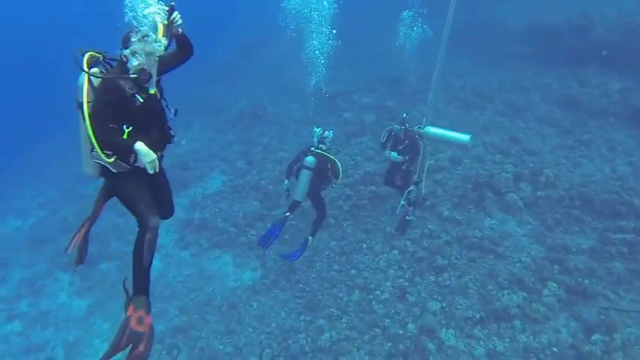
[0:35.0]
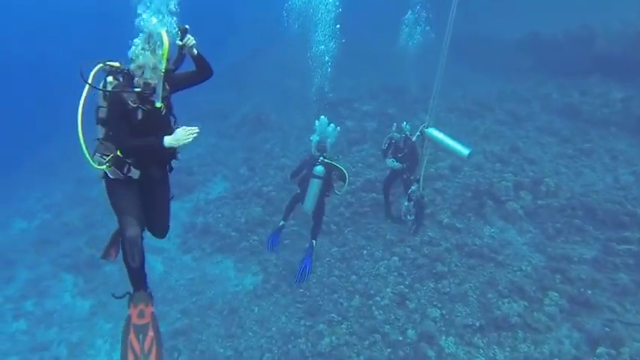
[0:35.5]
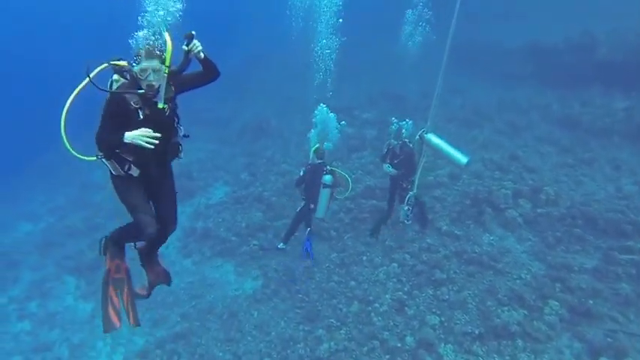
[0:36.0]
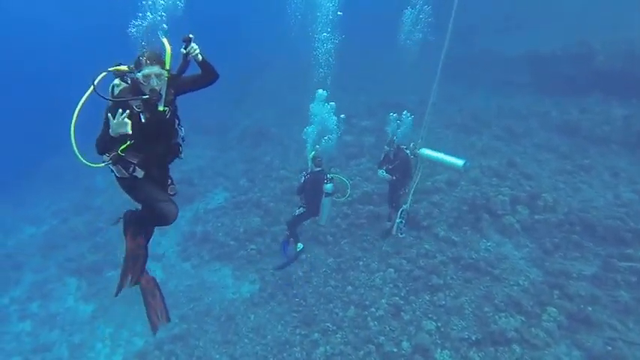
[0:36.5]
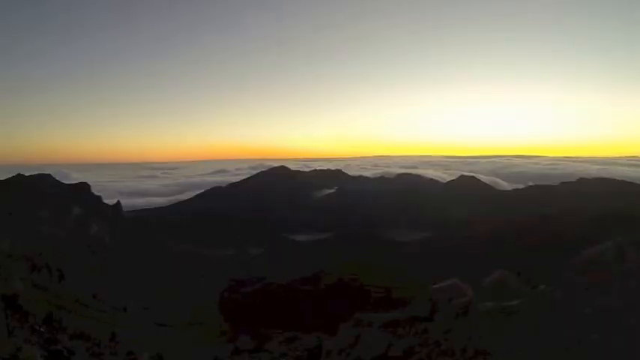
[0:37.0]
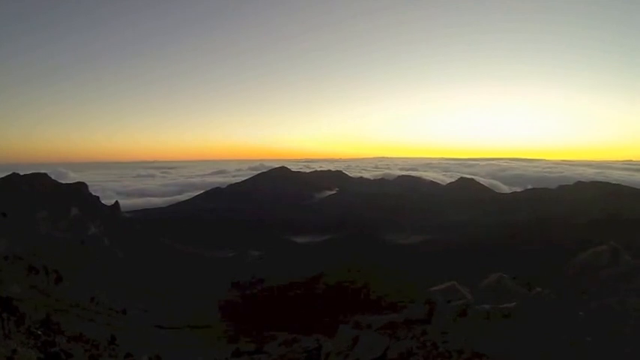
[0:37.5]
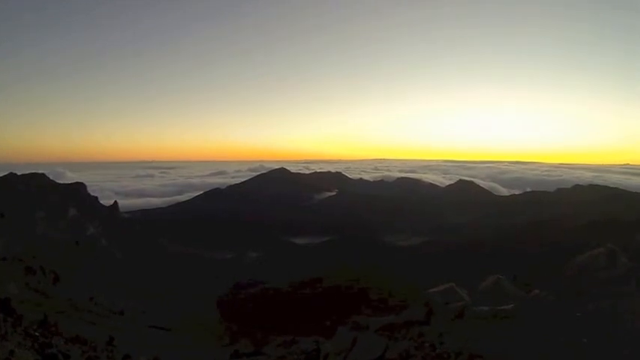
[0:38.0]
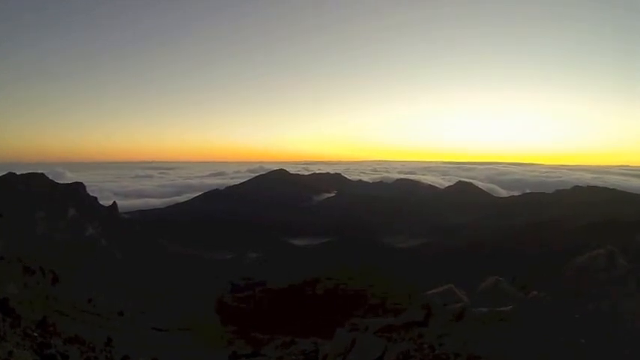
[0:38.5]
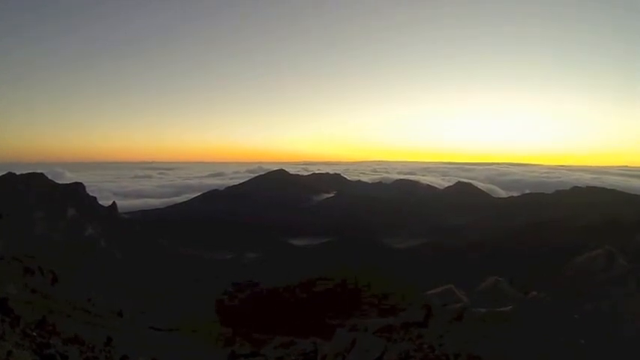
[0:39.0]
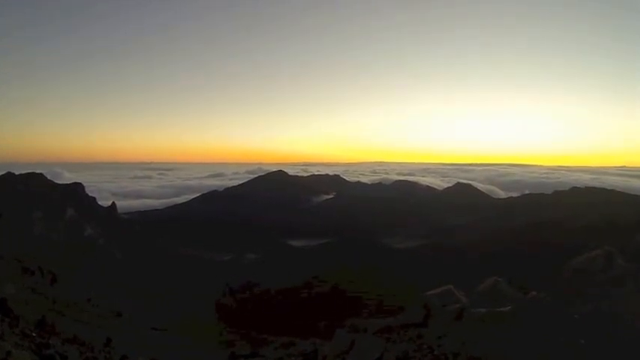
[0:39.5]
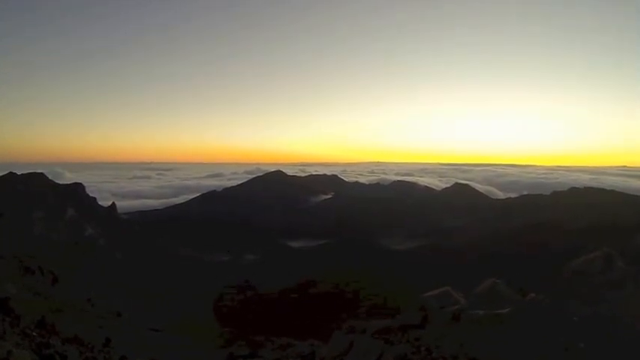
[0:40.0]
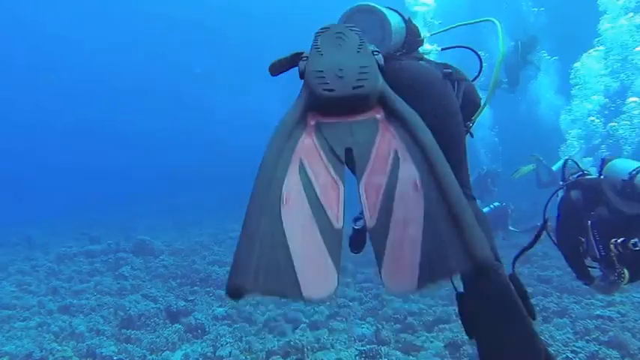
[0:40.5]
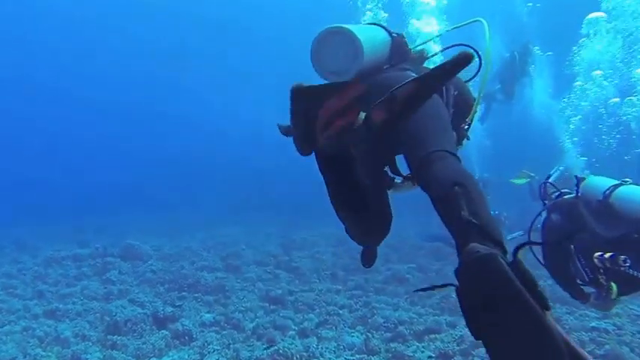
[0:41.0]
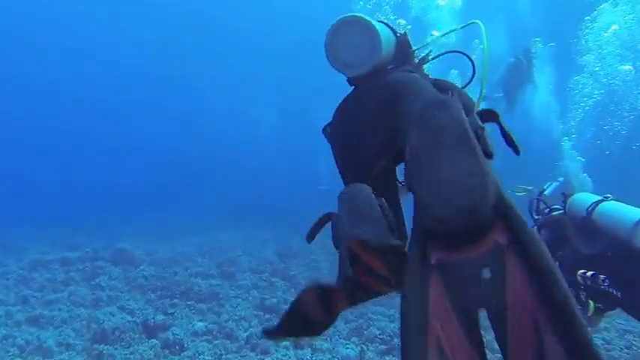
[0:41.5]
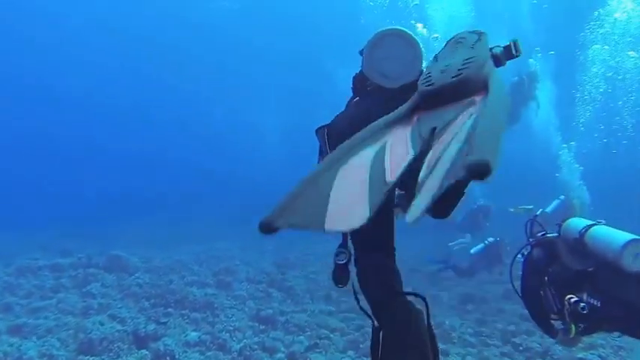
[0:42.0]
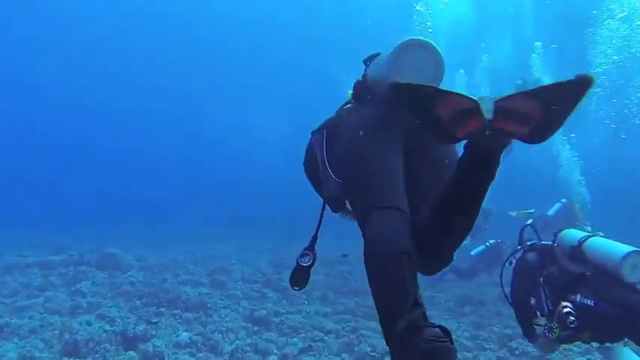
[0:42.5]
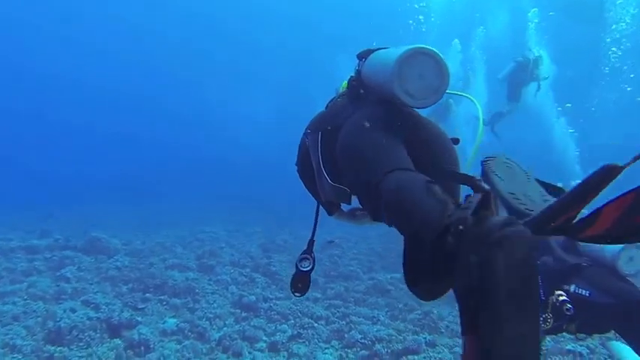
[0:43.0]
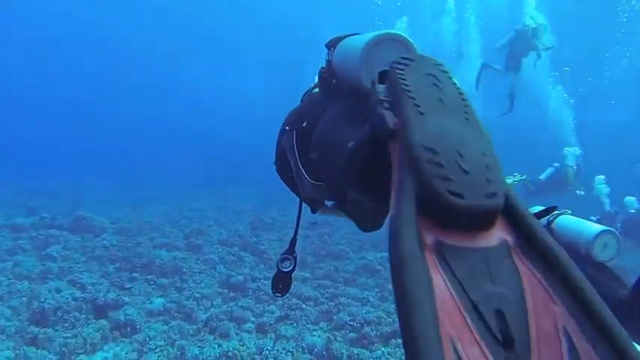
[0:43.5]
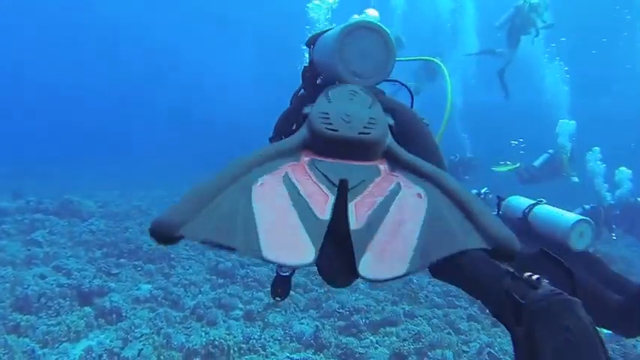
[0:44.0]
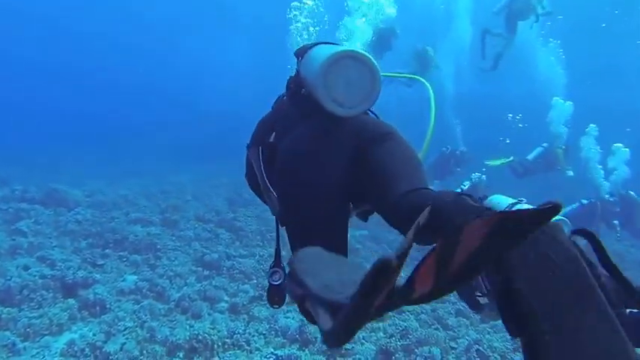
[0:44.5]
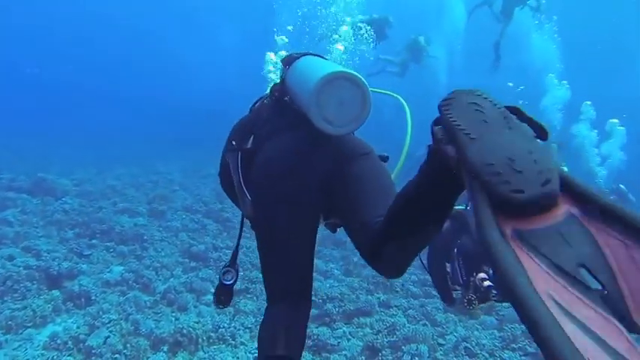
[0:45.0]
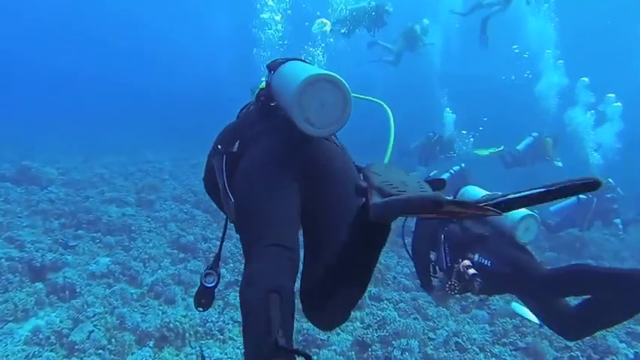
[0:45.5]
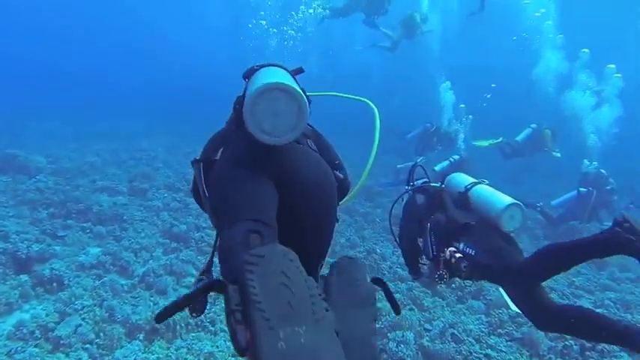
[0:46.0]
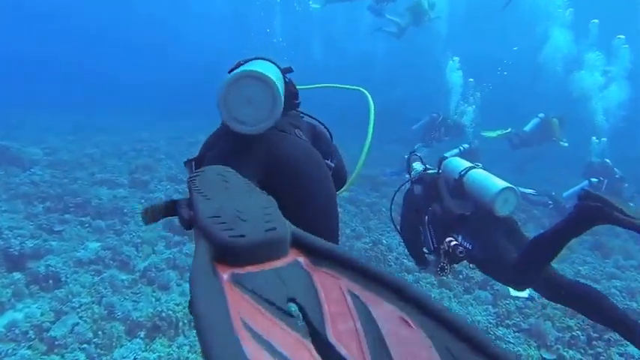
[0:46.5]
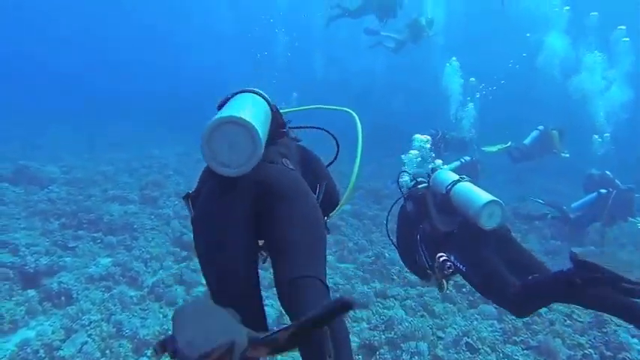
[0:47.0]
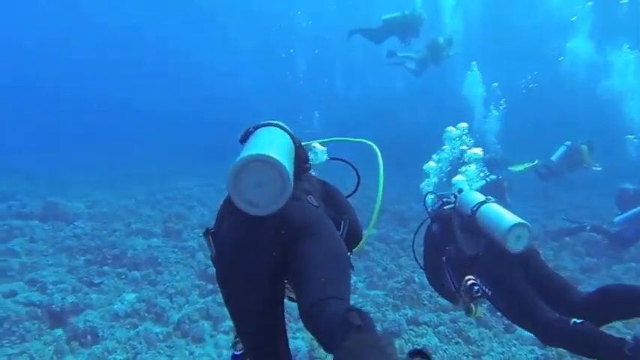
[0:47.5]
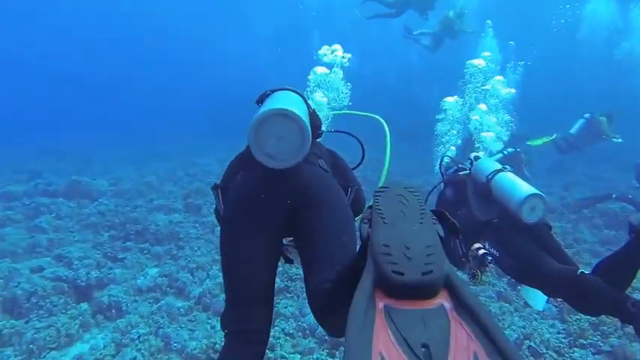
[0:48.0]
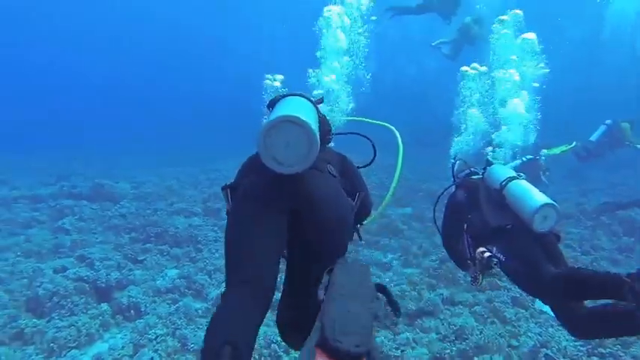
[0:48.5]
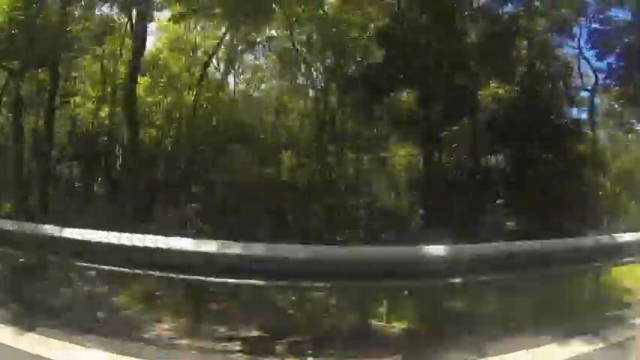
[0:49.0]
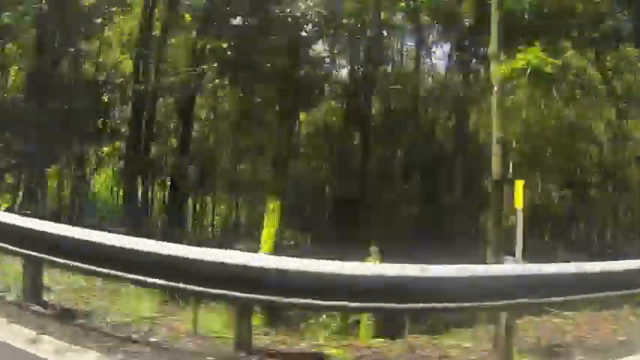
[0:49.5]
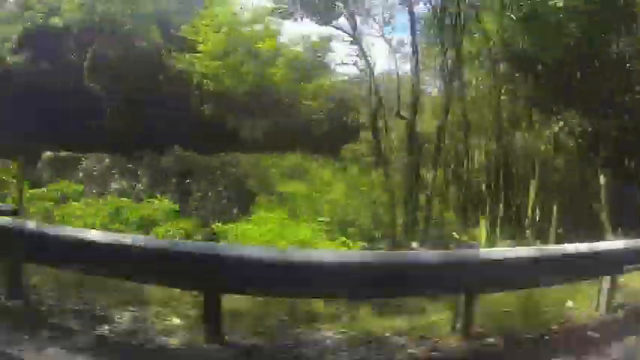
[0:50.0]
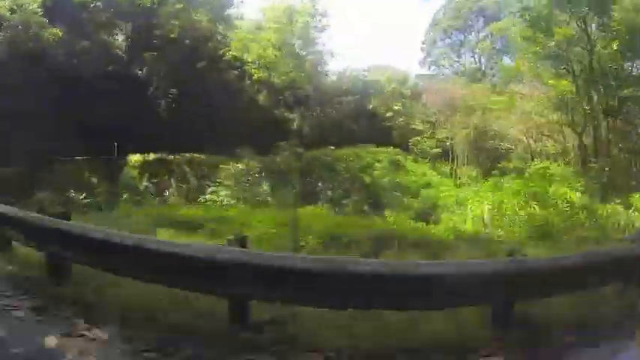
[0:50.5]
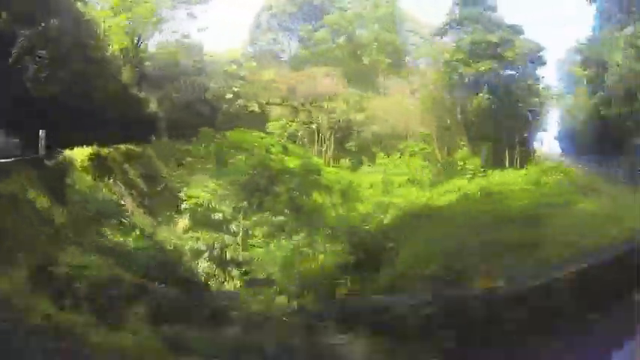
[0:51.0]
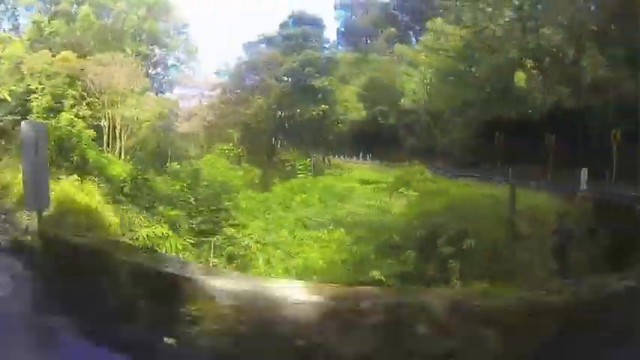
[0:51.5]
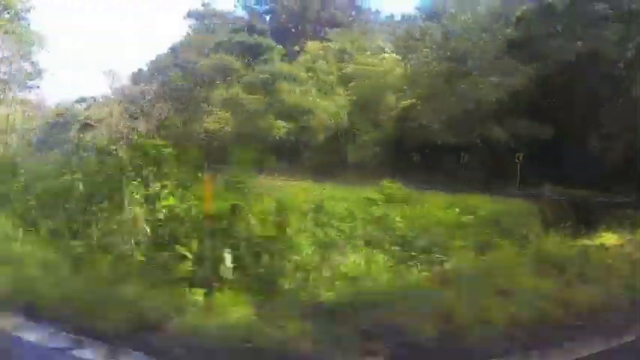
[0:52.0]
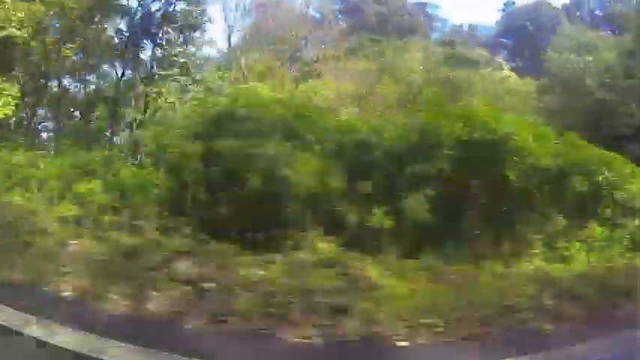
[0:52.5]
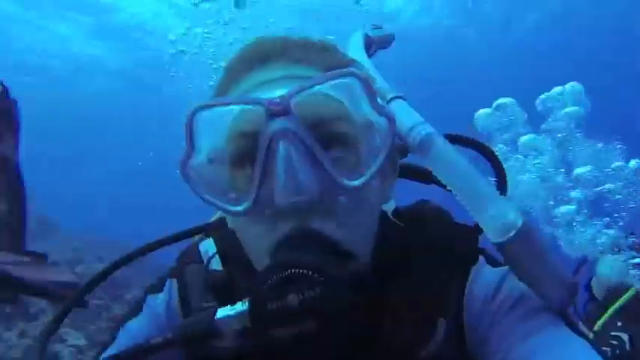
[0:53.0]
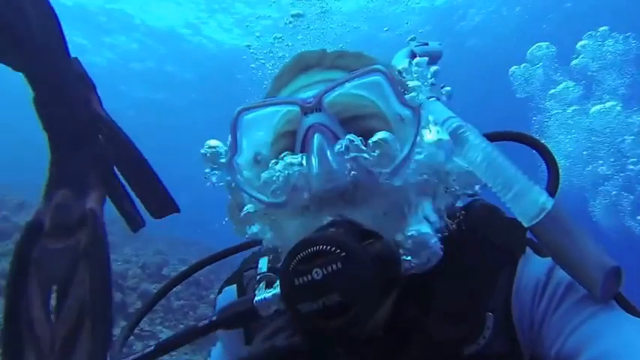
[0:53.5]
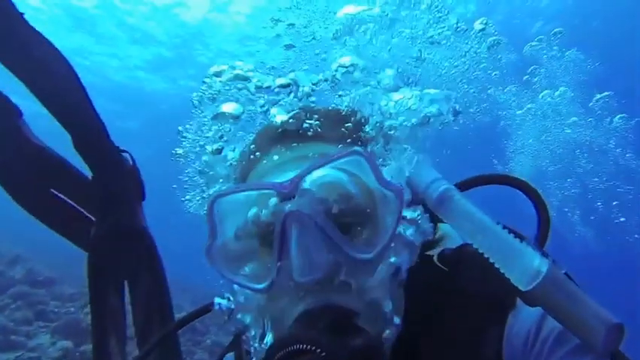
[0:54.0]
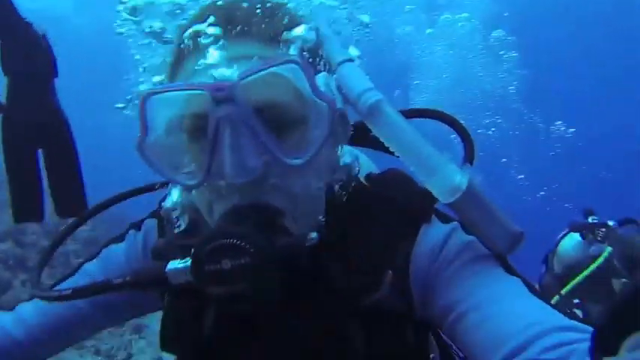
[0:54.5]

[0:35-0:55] Three people in scuba gear wear black suits with black fins, while a person at the bottom has blue fins. Their tanks are off-white, and there seems to be yellow tubing running from their tanks to their air masks. They also wear goggles. The person closest to the cameraman gives the OK sign. The next scene shows what looks to be a sunset, with yellow on the horizon, gray up top, a bit of sunshine slightly on the right side, and a few clouds underneath. Below appear to be black rocks, possibly mountaintops. The scene then goes underwater, with blue water and brownish rock formations underneath. The divers' off-white tanks, bubbles going upward, their black scuba gear and the black fins on their feet are visible as they float along; there is a reddish portion on their fins. A yellow line runs air to their mouths, and white bubbles pop up. The scene then changes to a road; they seem to be in a car, passing a gray railing with green-foliaged trees in the background, traveling at a high rate of speed. The next scene is a close-up of one of the people in scuba gear, showing clear tubing, clear goggles with a little purple around the edge, and a black air mouthpiece that gives them oxygen.